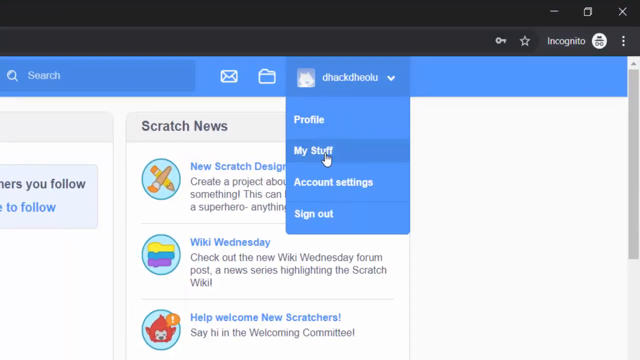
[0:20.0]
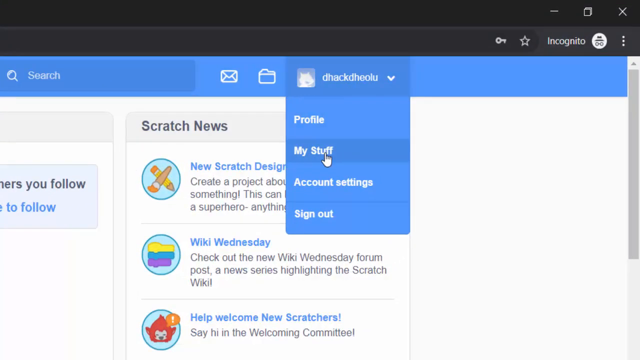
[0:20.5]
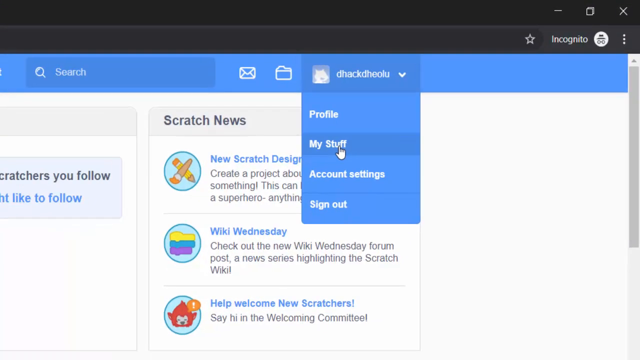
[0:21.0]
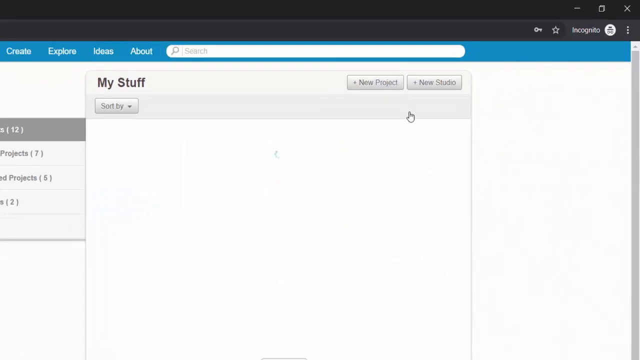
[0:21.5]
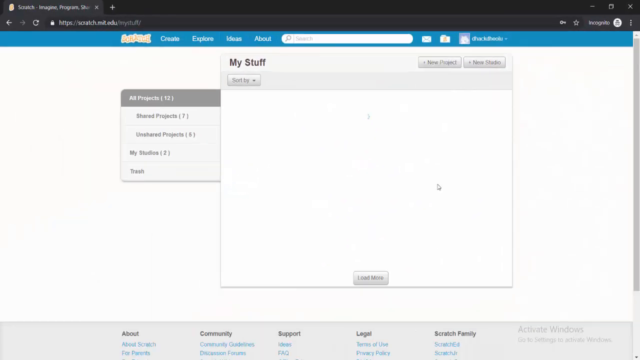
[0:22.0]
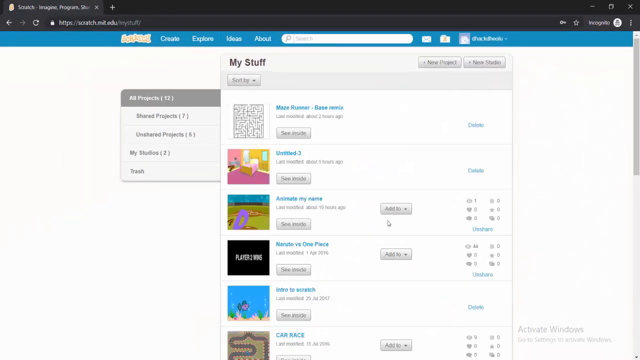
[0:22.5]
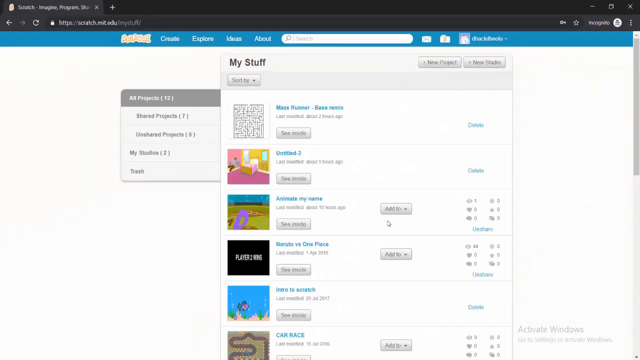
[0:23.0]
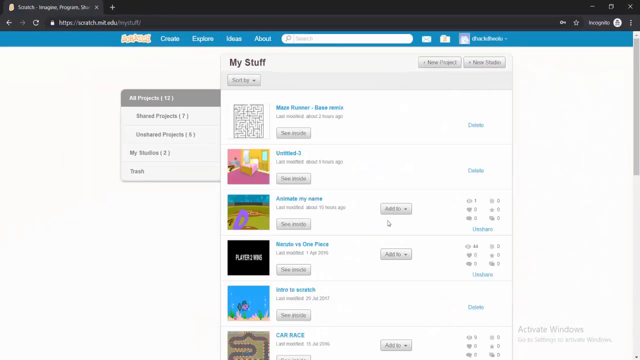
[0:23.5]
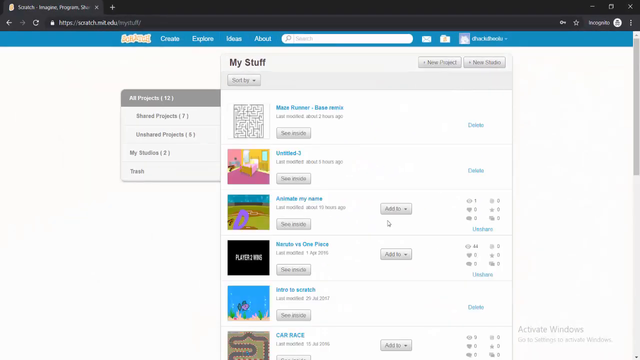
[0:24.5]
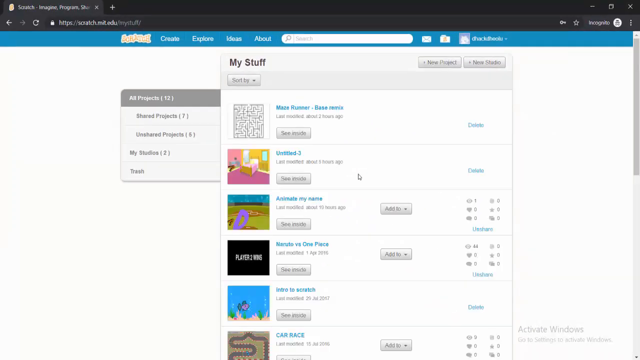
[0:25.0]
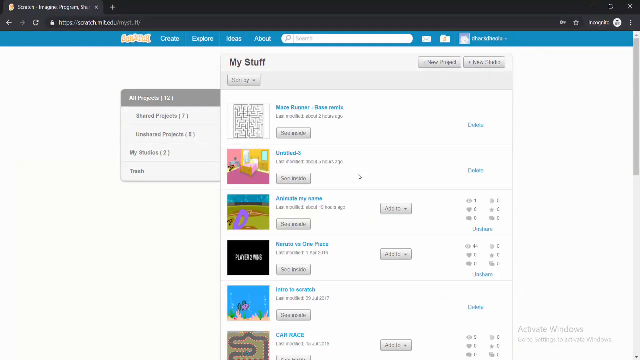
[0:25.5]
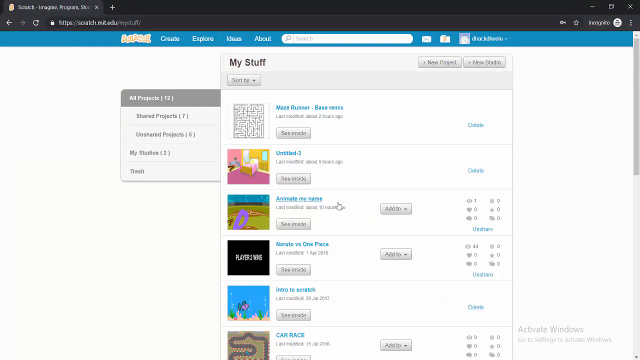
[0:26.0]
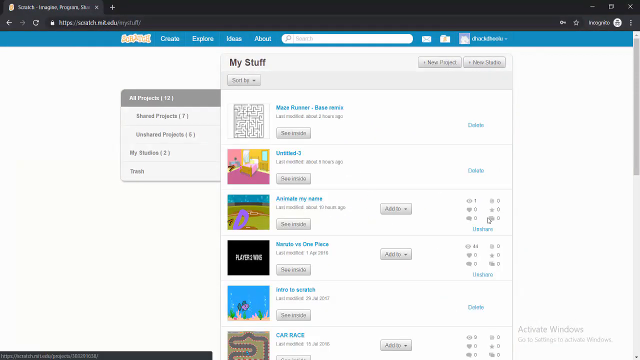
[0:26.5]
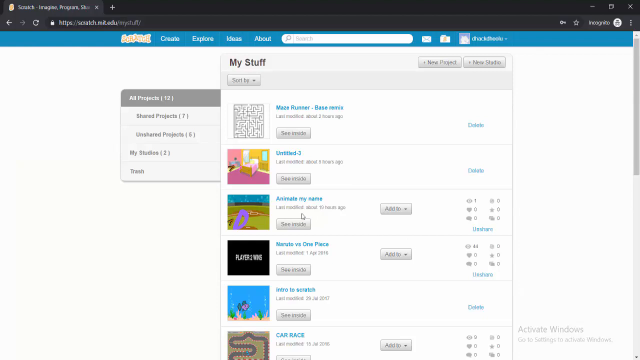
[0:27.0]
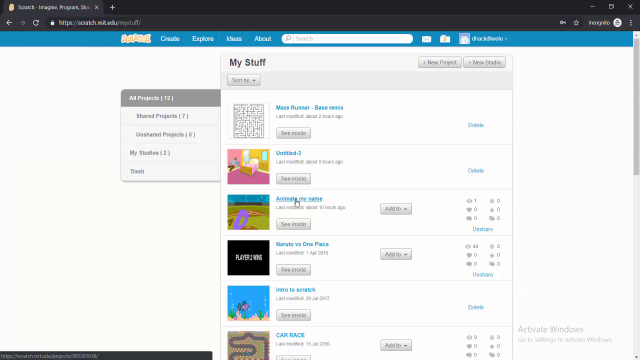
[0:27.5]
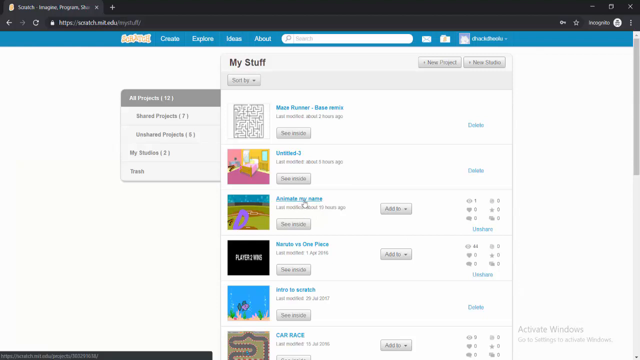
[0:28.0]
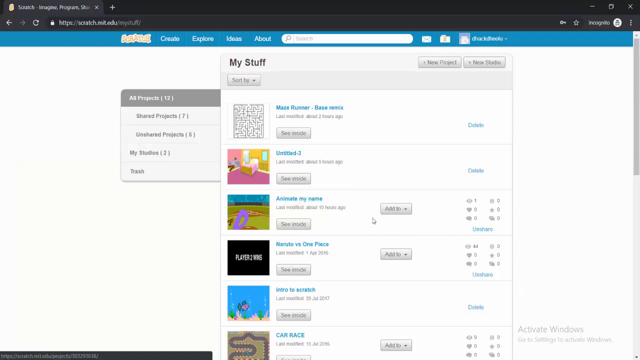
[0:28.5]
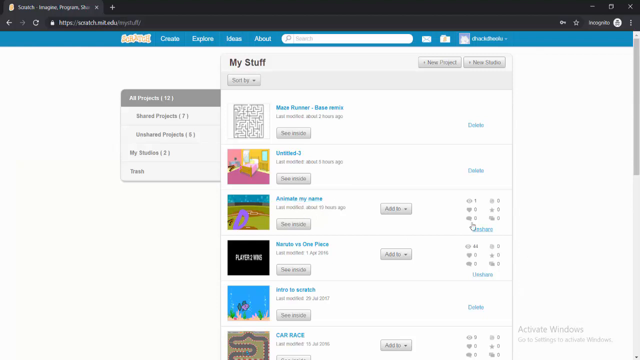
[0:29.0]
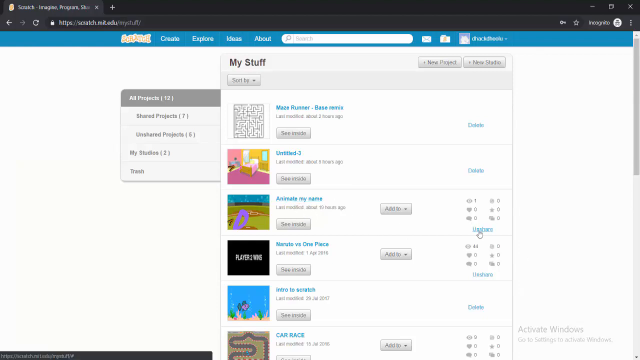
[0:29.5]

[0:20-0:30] The video is zoomed in on the upper right portion of the Scratch website. The profile header has been clicked, and the profile drop-down menu is on the screen, showing "Profile", "My Stuff", "Account Settings" and "Sign Out". The mouse hovers over the My Stuff button. He clicks it, and it takes him to the My Stuff page of the Scratch website. The screen zooms back out, revealing the whole tab. Several projects load under My Stuff, including Maze Runner, Untitled 3, Animate My Name, Narratover's One Piece, Intro to Scratch and Car Race, each with an accompanying image on the left side. The mouse hovers over the third project, Animate My Name. He then clicks on the side of it, which says "Unshare".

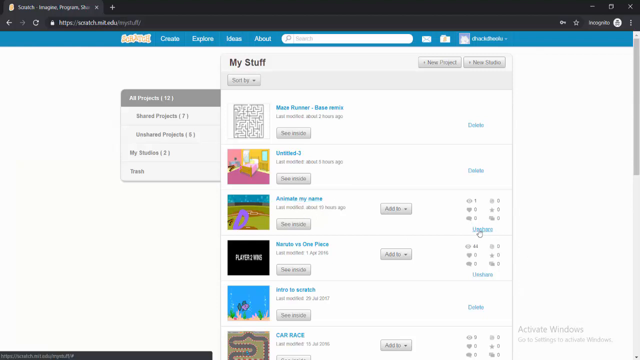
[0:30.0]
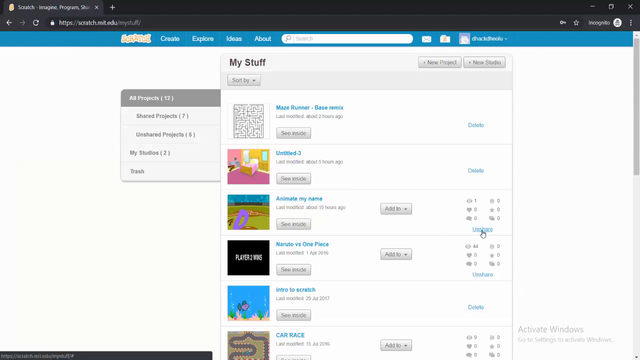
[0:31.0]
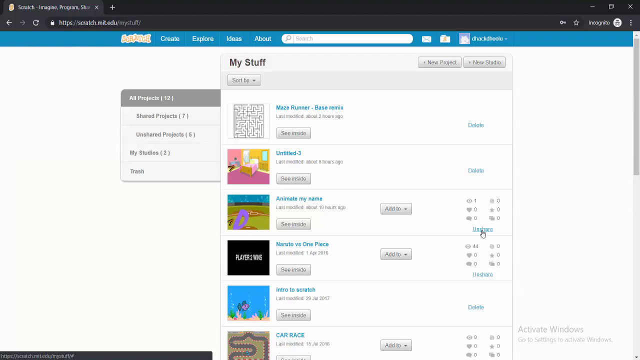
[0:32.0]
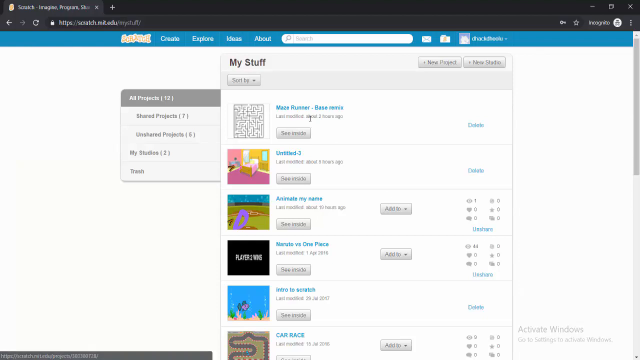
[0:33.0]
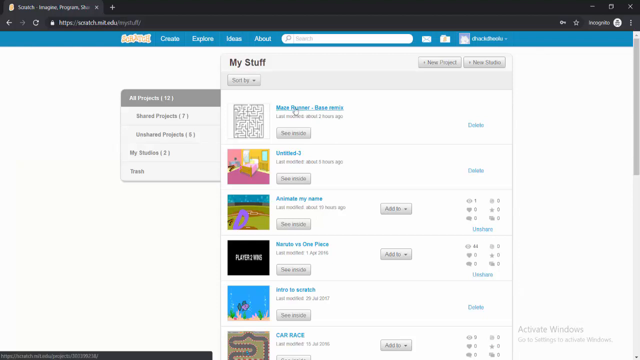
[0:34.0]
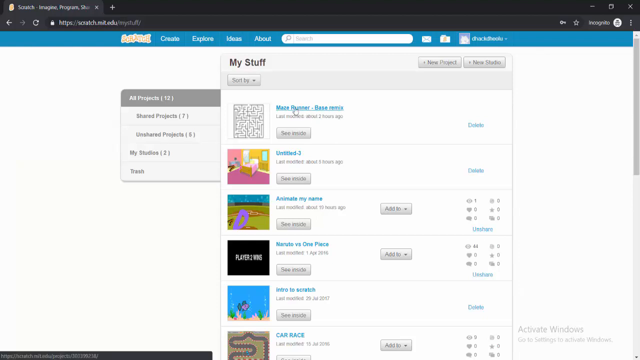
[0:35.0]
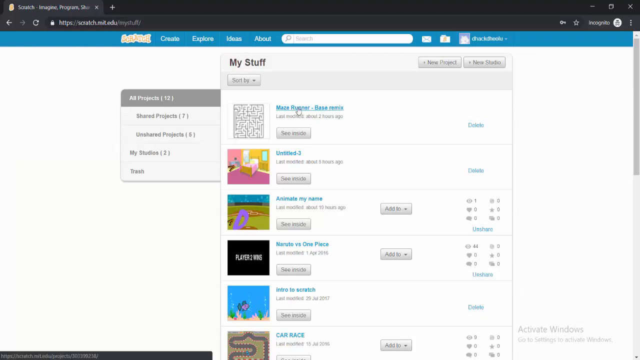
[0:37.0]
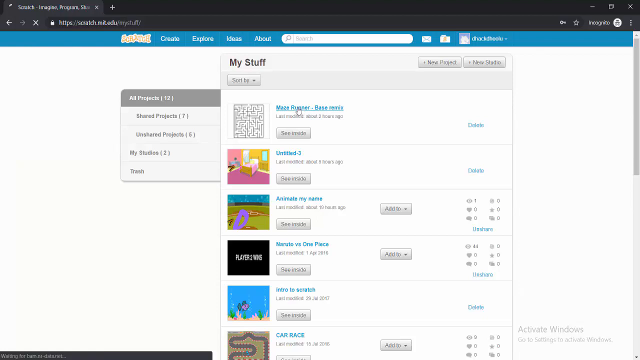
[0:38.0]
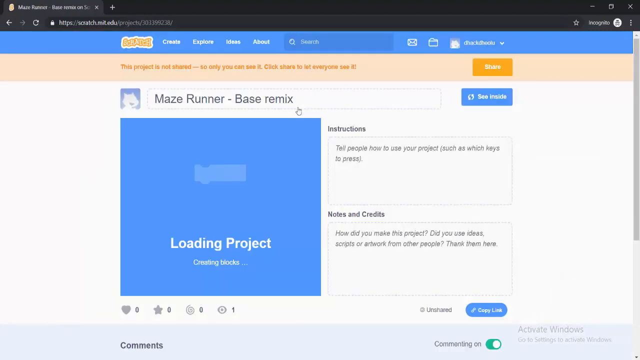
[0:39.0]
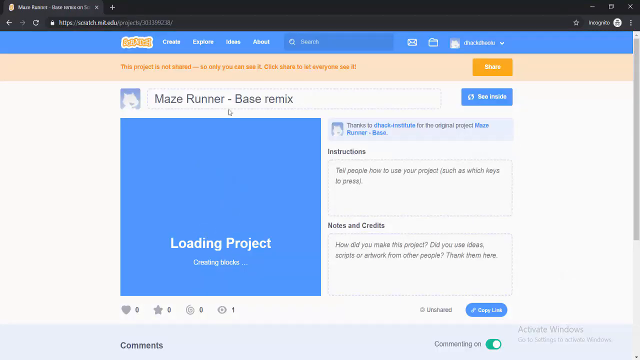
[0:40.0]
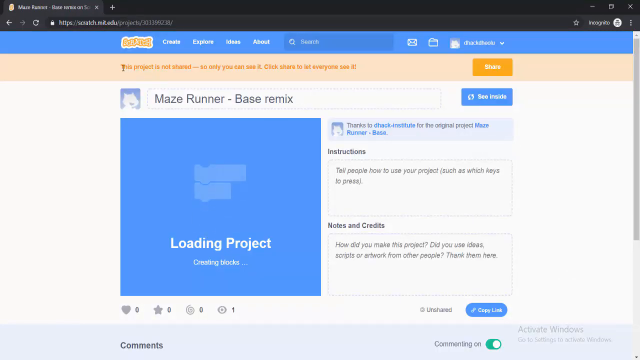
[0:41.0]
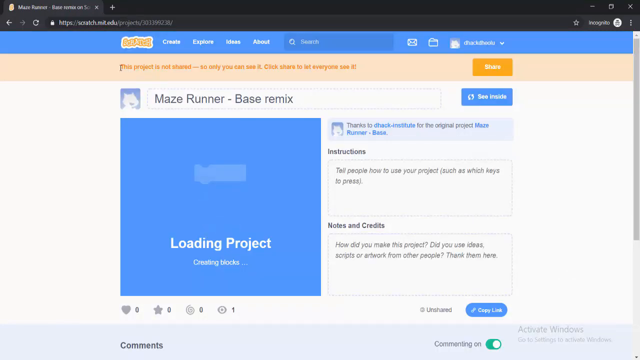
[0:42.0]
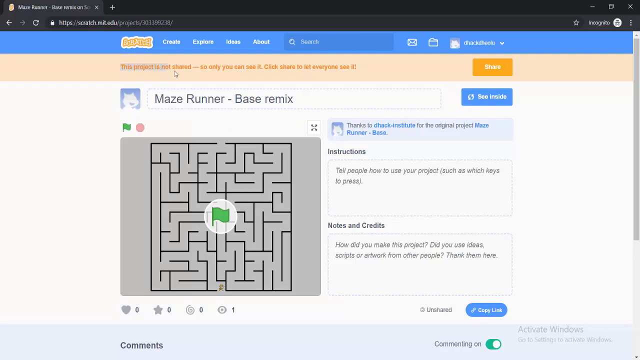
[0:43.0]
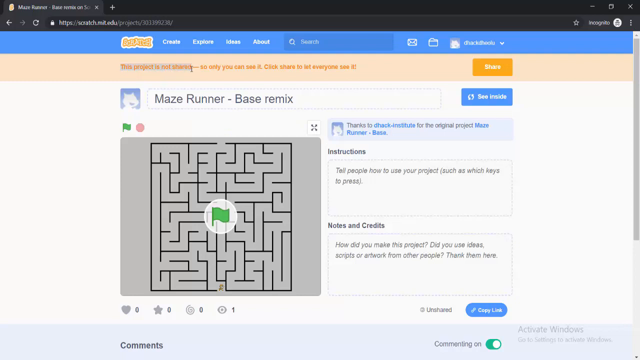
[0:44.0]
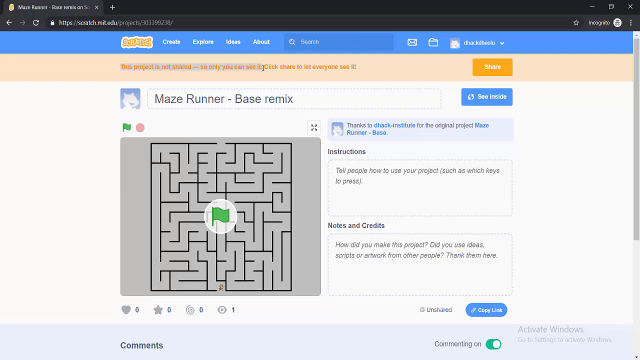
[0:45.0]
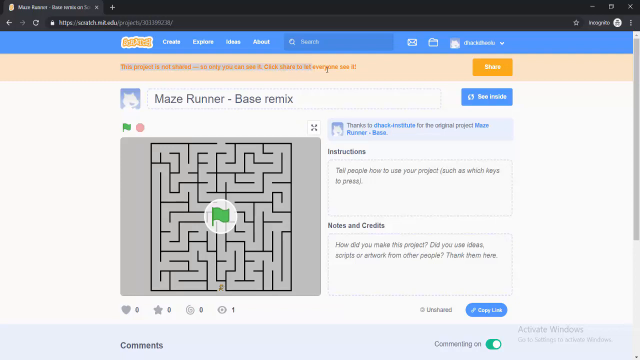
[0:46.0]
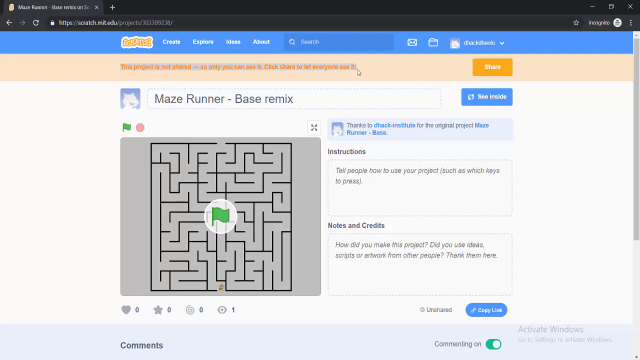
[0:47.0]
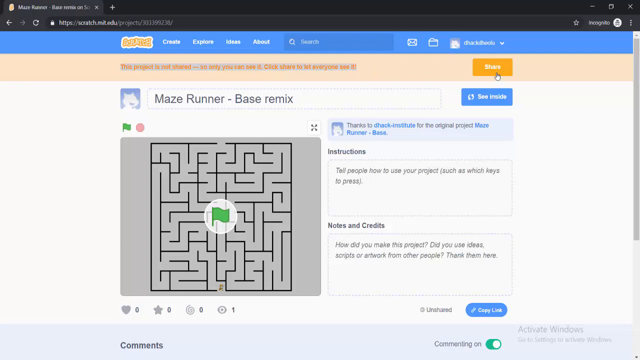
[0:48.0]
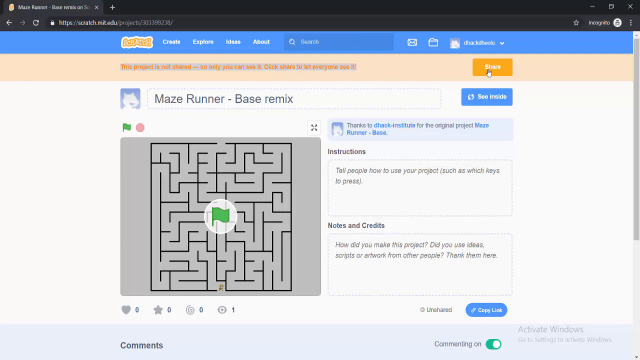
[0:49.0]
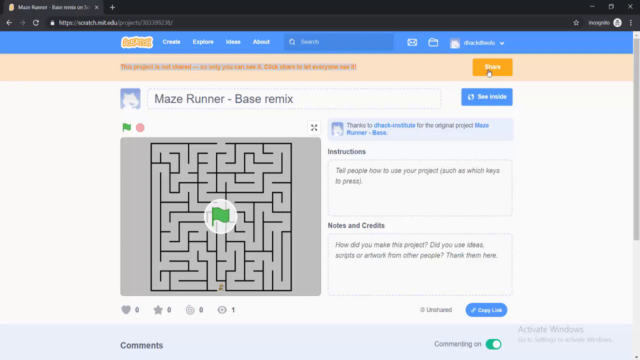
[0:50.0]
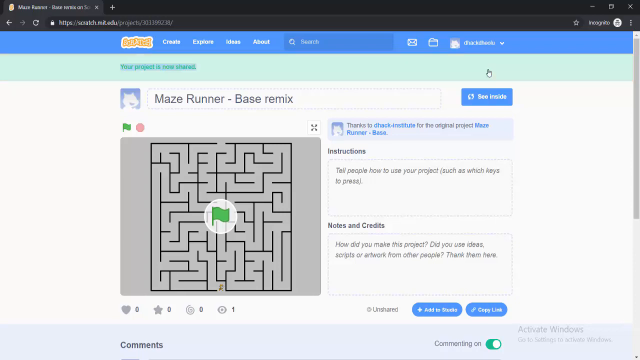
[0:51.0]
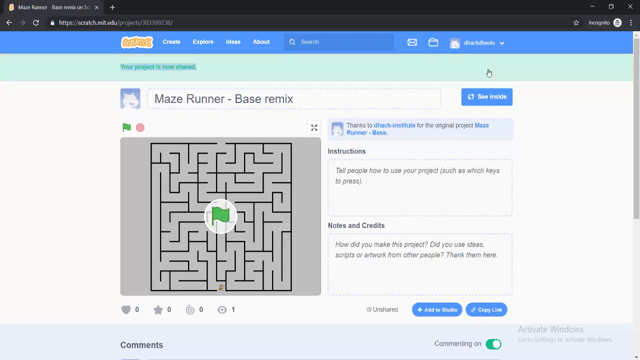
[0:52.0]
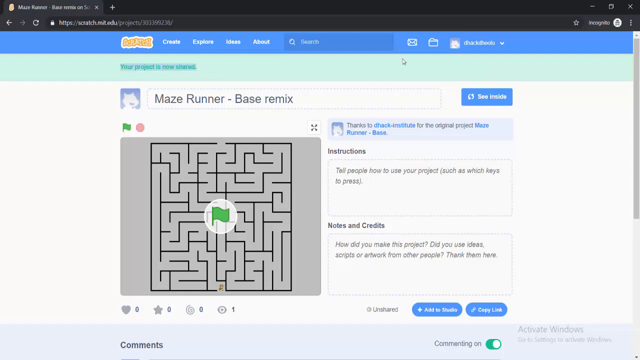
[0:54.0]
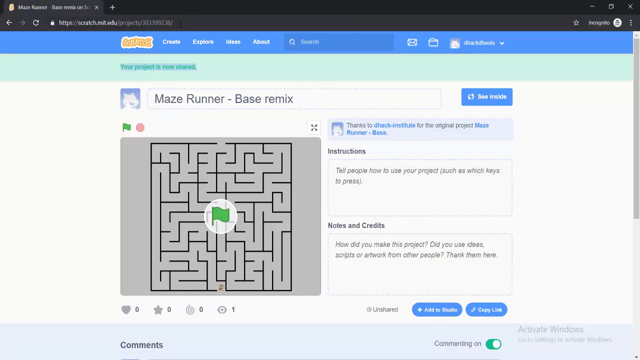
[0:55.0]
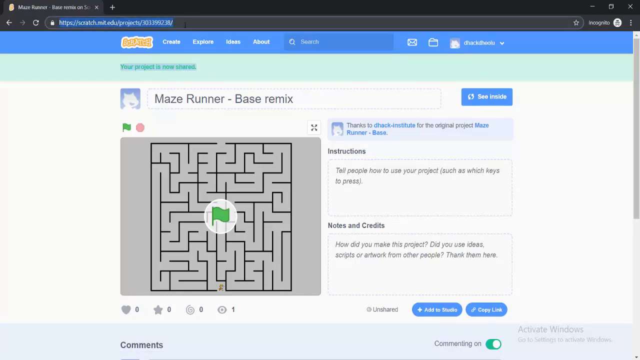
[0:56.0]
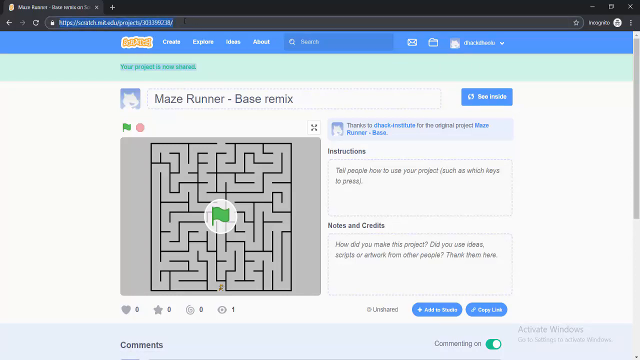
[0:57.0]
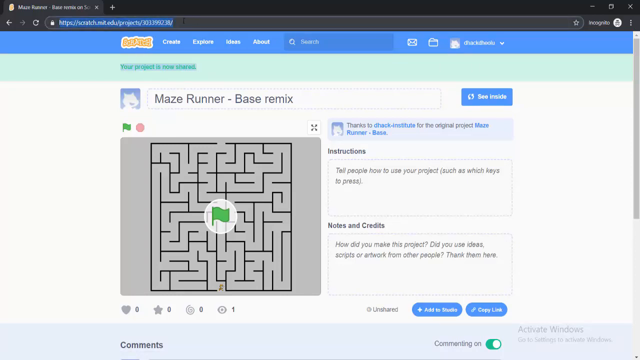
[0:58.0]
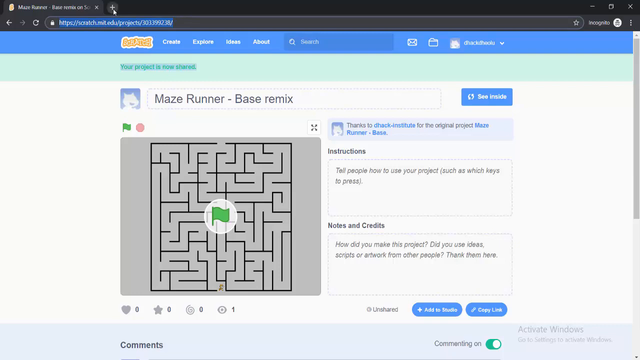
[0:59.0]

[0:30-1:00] The video is on the My Stuff page of the Scratch website. Under the My Stuff panel there are several projects the user has created. His mouse hovers over the Unshare button on the right side of the entry for Animate My Name. The mouse then hovers over the title of the first project, called Maze Runner Base Remix. He clicks on it, and the dashboard for this project loads. The classic screen for the open project appears, with the project loading in a blue box and an instructions, notes and credits tab to the right of it. The project finishes loading, and the thumbnail is a picture of a maze with a green flag in the middle to start it. The mouse hovers over the top of the website, where a warning says "This project is not shared, only you can see it. Click share to let everyone see it", and then over the share button right next to it. He clicks it, and the text changes to "Your project is now shared" on a green horizontal panel. He then selects the website URL and clicks the plus button to create a new tab.